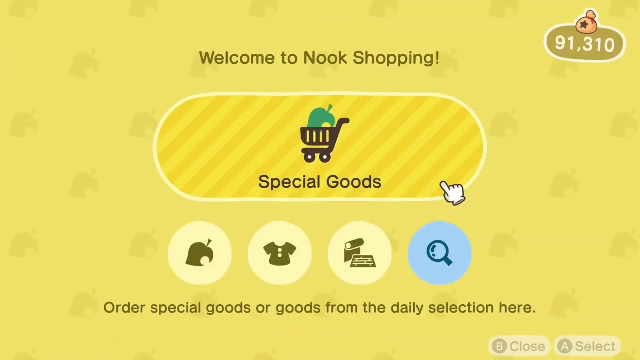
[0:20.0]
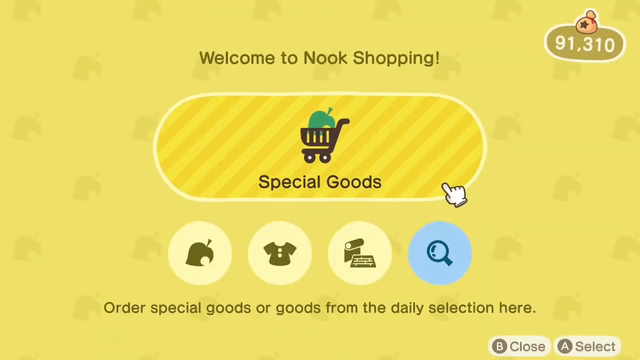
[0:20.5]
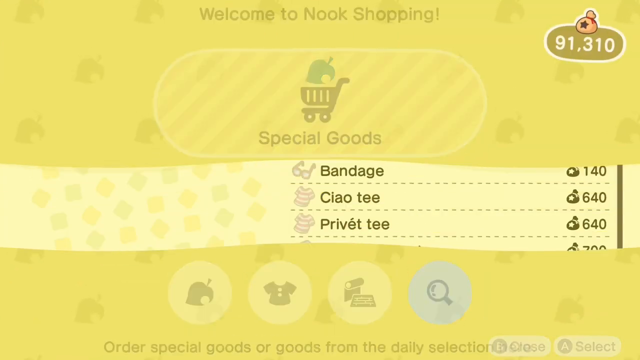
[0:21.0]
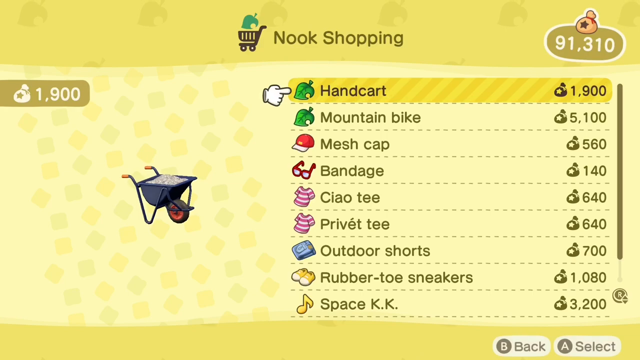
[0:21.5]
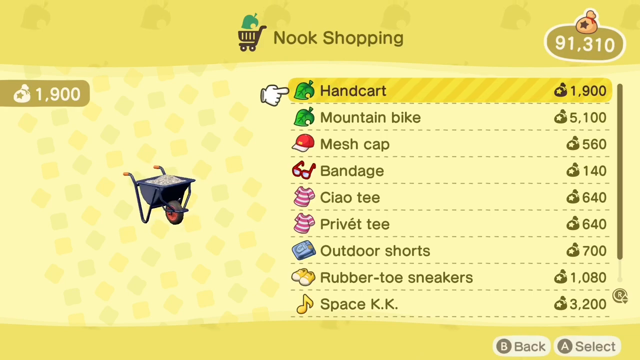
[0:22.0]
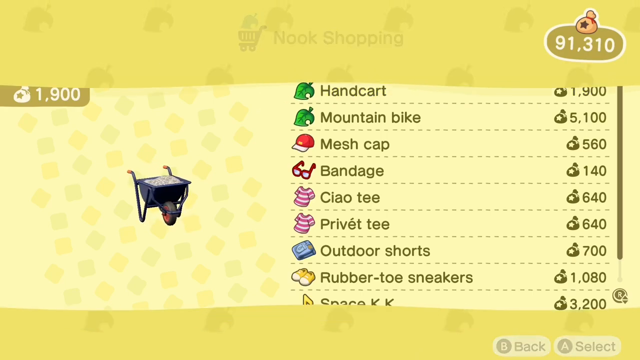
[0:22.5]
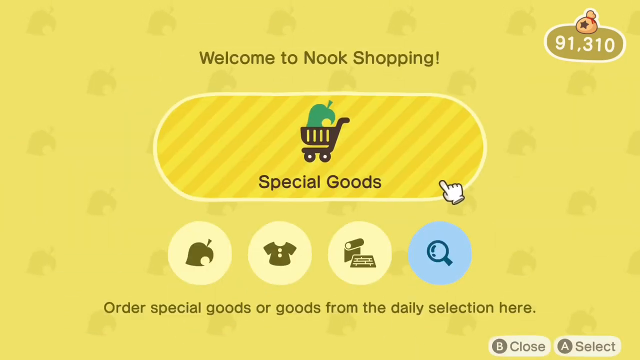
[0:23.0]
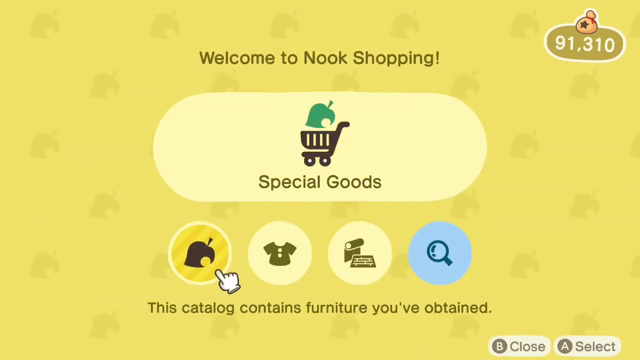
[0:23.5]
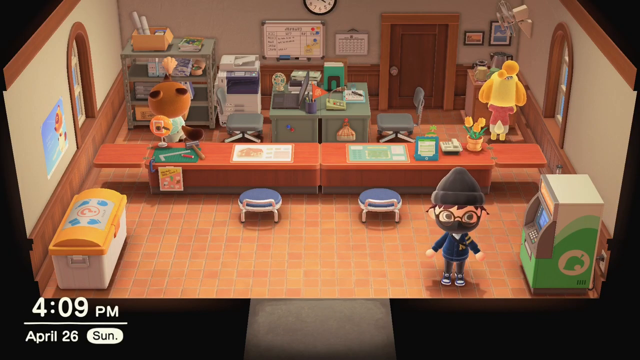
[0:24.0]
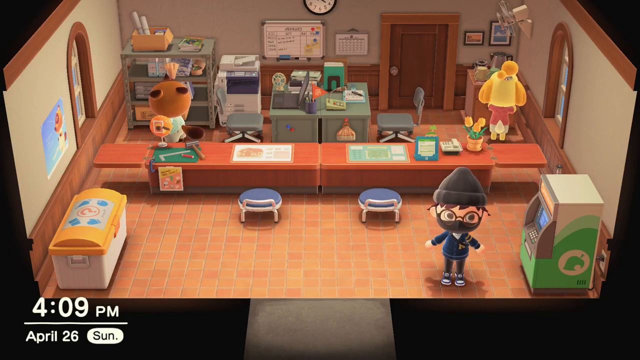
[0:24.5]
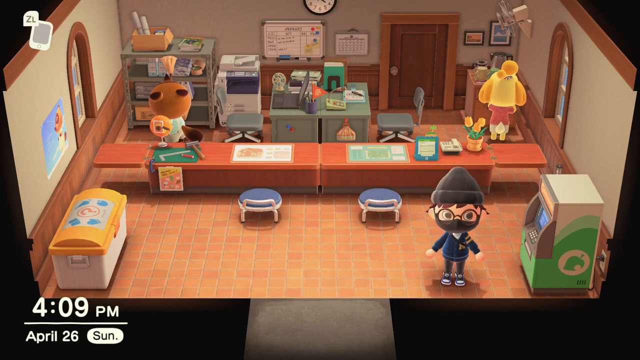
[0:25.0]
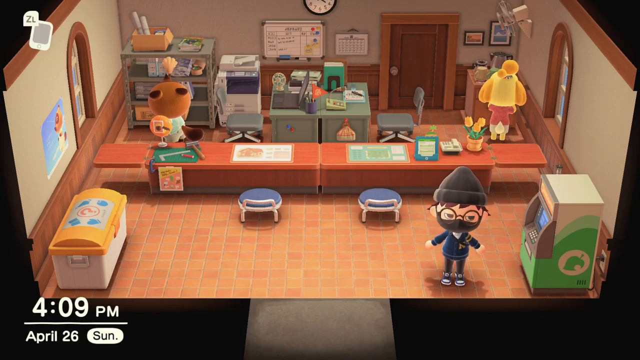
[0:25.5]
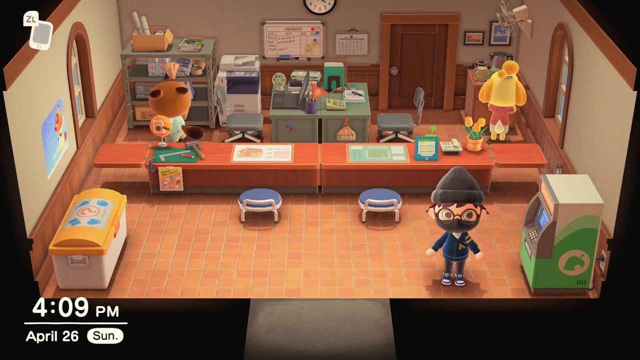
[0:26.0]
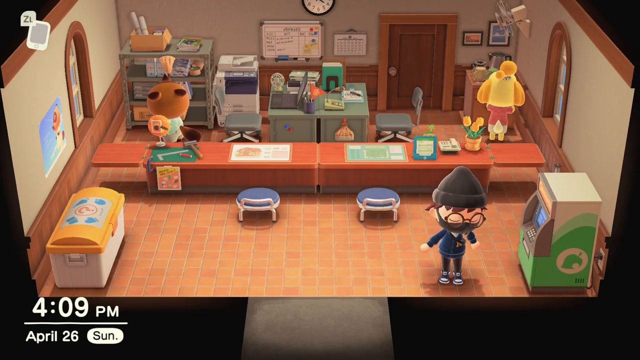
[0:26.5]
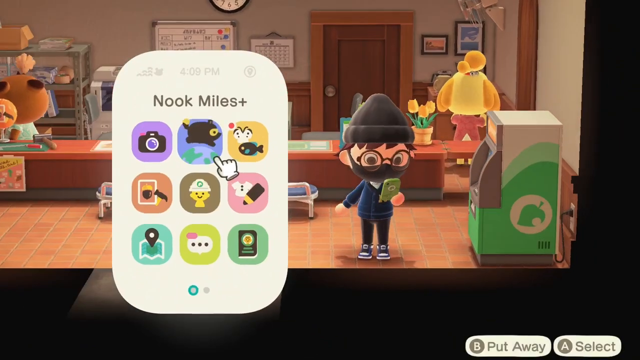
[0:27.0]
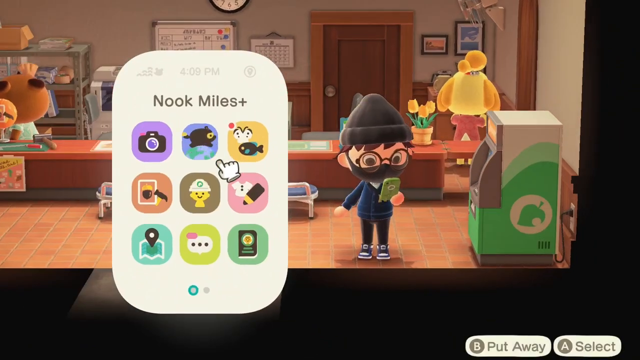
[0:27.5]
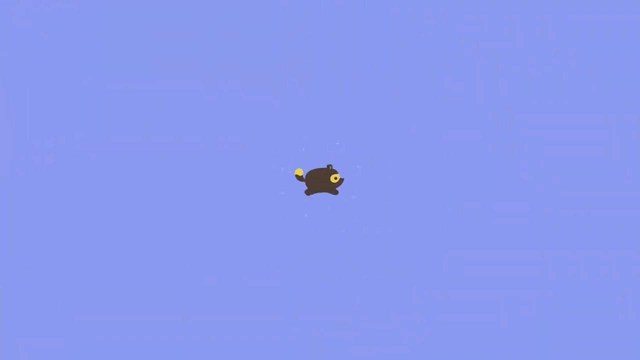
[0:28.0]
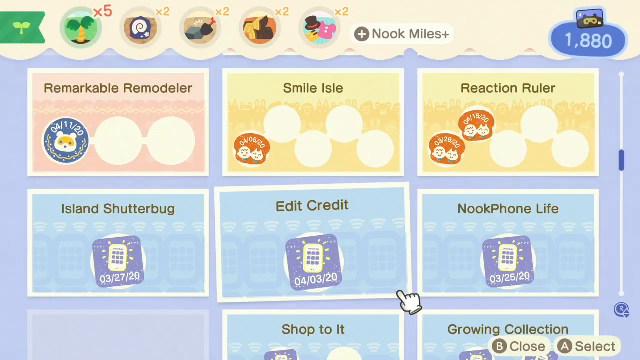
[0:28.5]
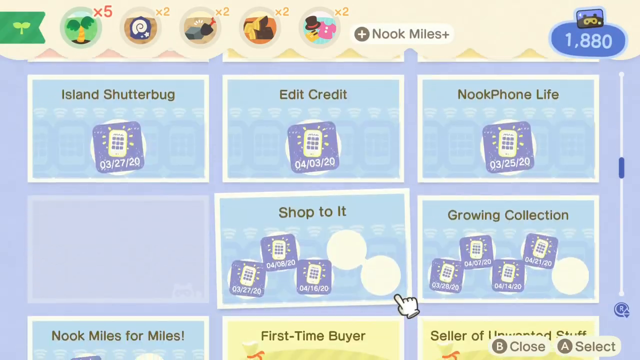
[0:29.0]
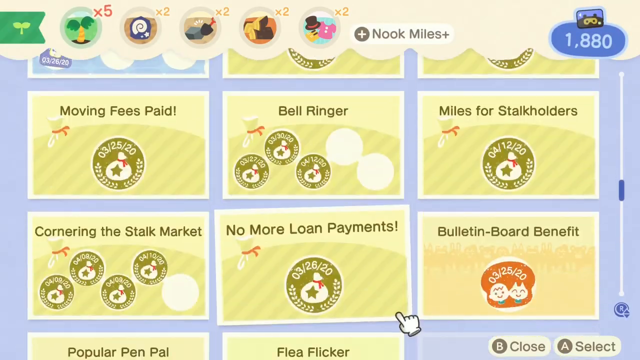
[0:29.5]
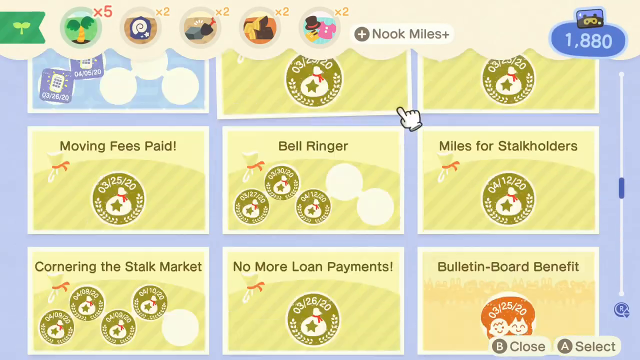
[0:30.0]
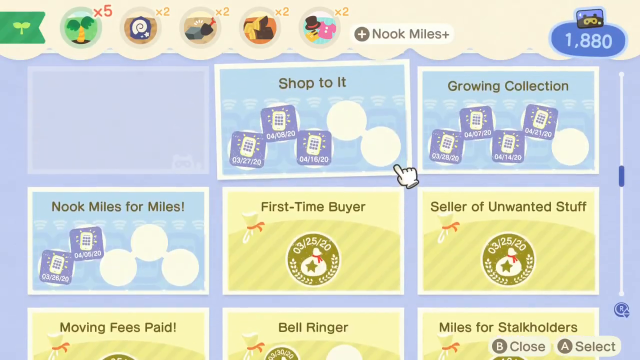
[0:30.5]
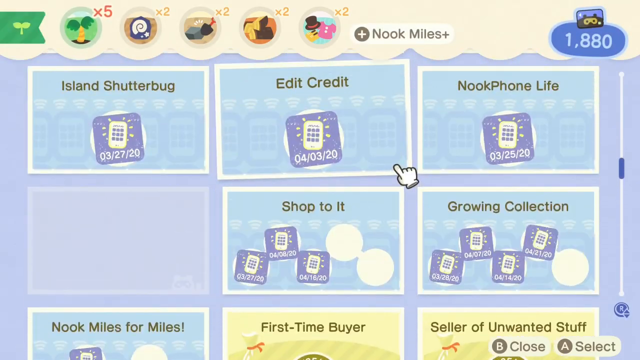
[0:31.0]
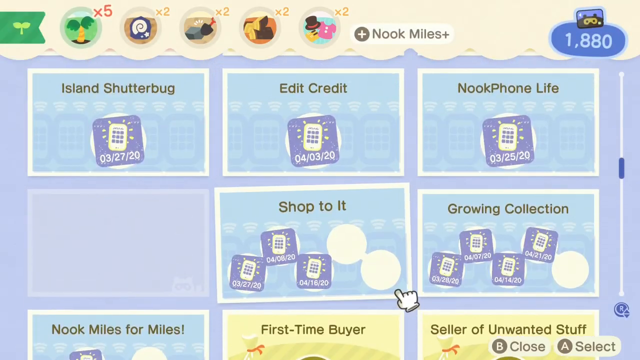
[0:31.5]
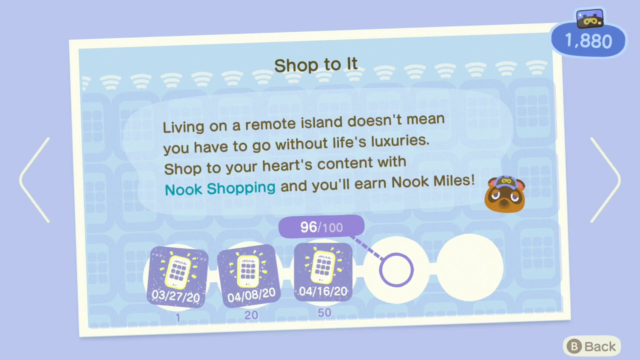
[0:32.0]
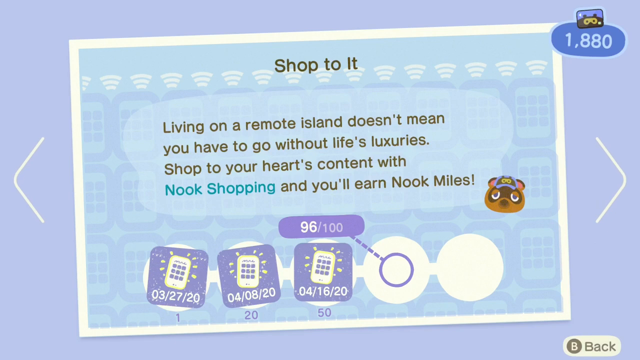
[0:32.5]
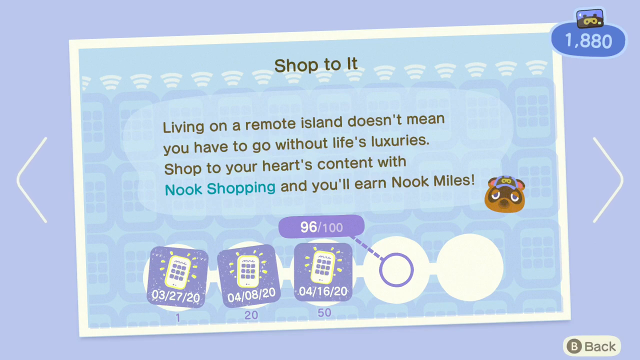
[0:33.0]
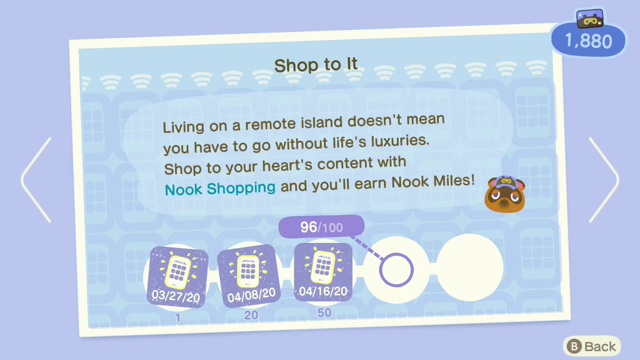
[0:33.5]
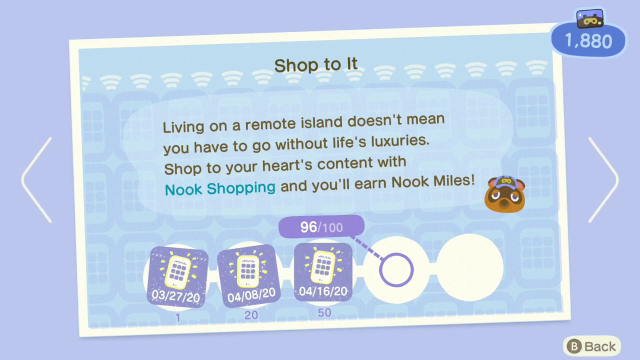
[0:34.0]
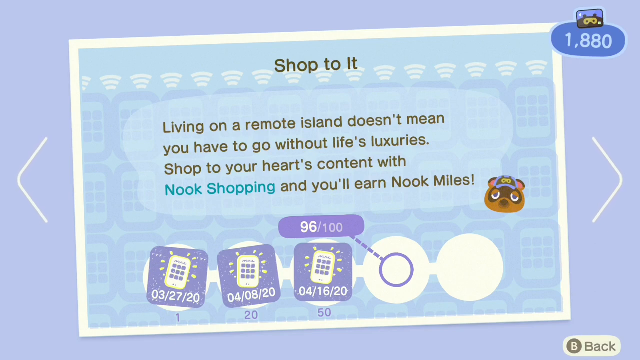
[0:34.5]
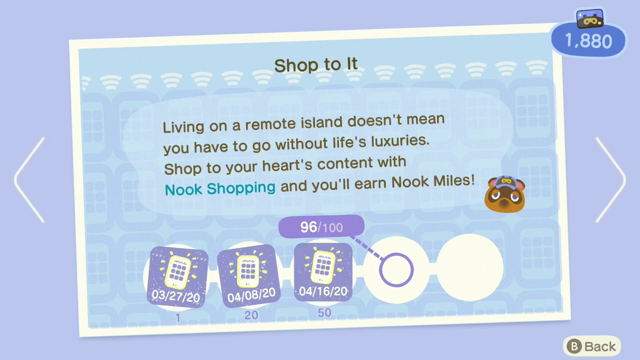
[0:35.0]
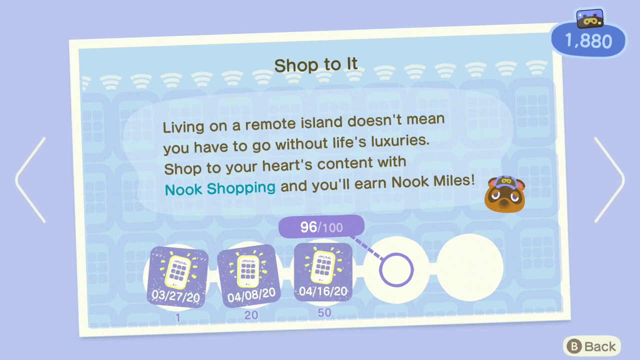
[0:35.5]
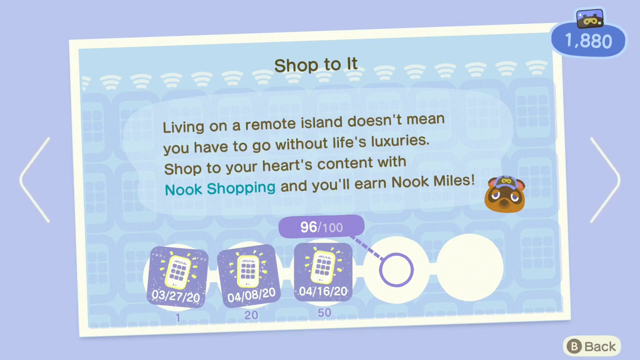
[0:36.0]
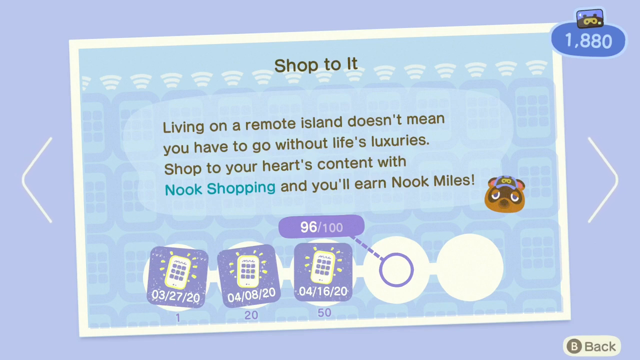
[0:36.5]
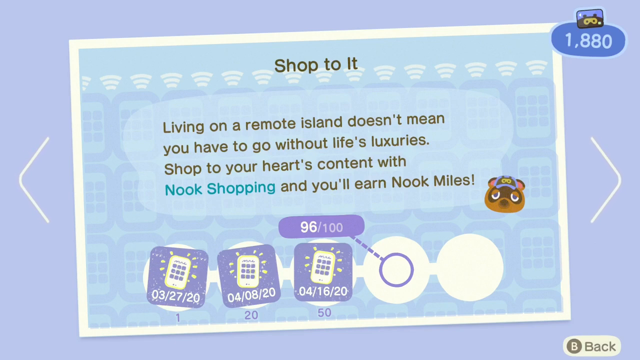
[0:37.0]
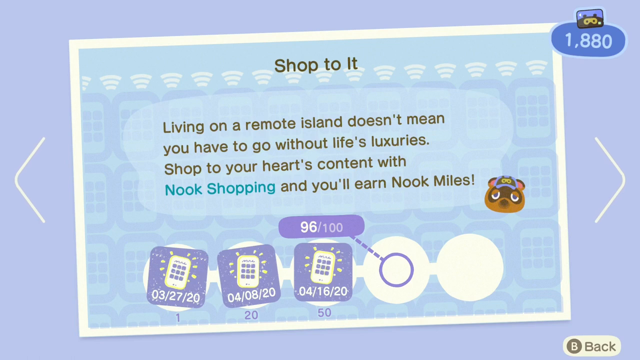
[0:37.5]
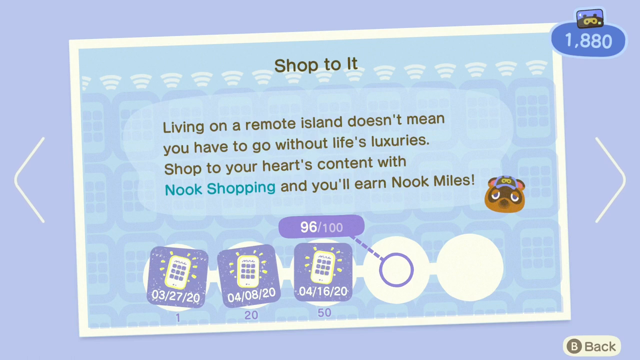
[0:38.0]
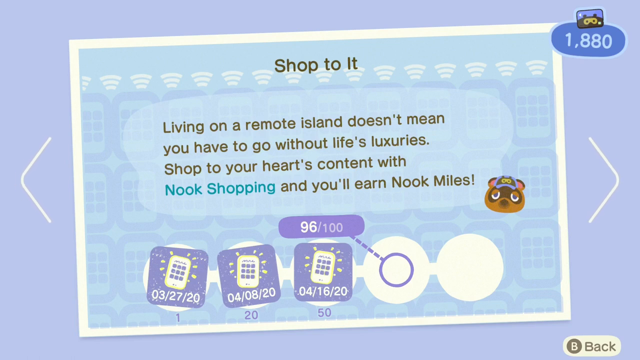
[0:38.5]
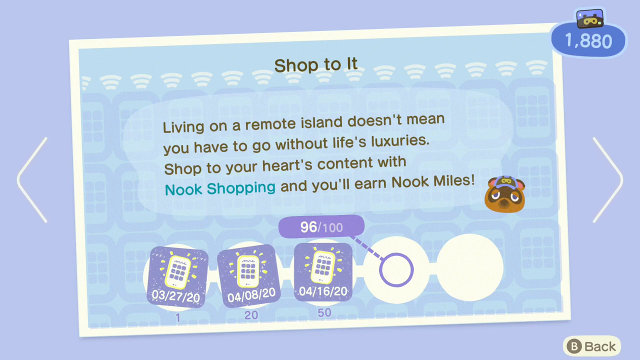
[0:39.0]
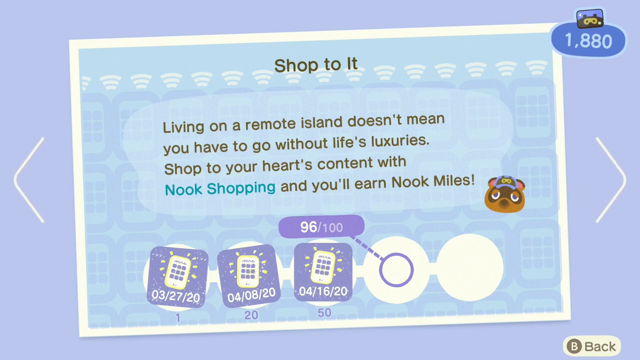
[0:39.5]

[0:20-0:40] The Nook Shopping Center is opened and the player presses the Special Goods button, which opens a menu showing how much in-game currency the items cost. The player is then shown inside the store that contains the Nook ATM. They select the Nook Miles category and scroll down to select Shop To It, which shows they are at 96 out of 100 in the Achievements section of this category. A short description says that the more you shop, the more Nook Miles you will earn. Two other characters are behind the counter in the room with the Nook ATM: the one on the left is dusting around the office area, and the other seems to be doing some work on the side. The player's current amount of Nook Miles is shown as 1,880.